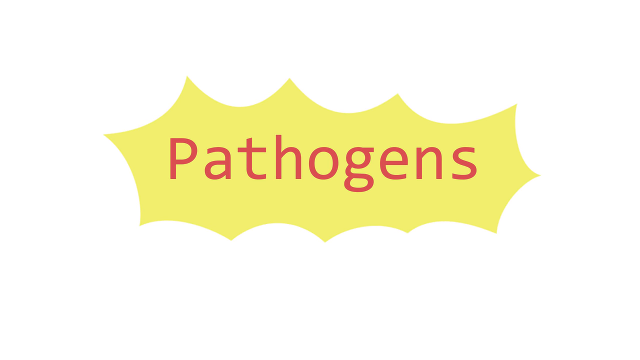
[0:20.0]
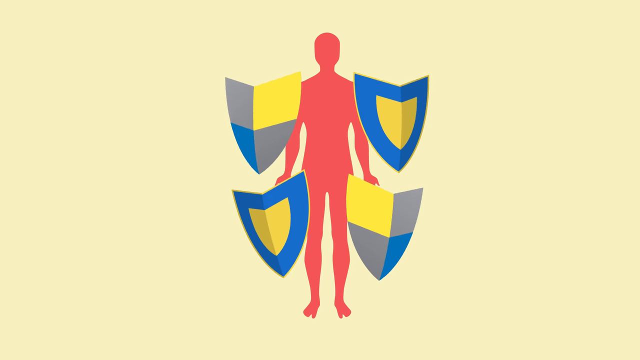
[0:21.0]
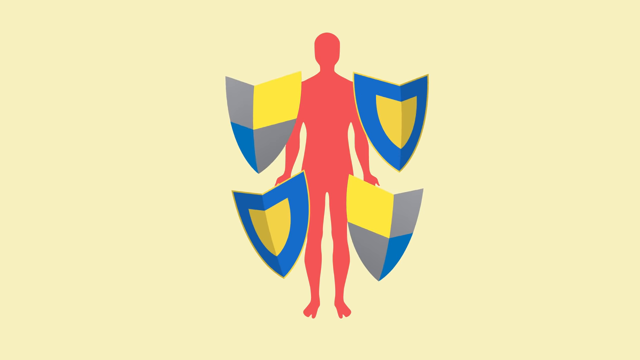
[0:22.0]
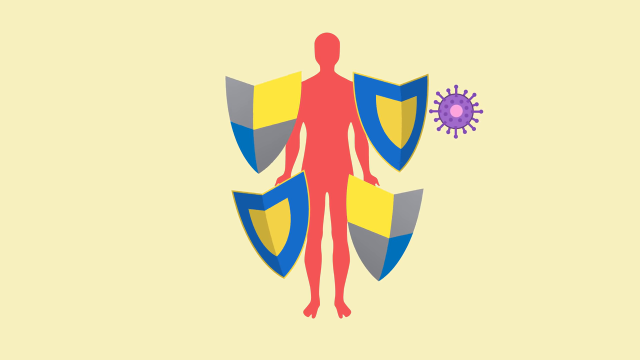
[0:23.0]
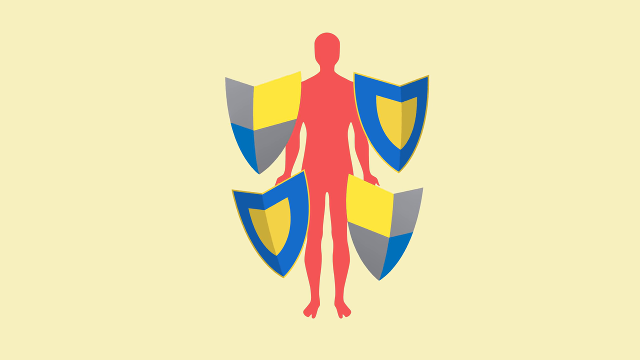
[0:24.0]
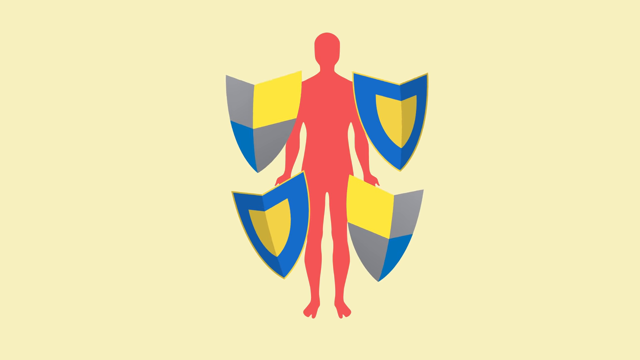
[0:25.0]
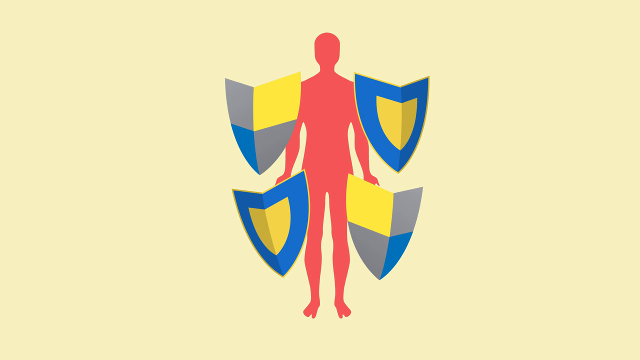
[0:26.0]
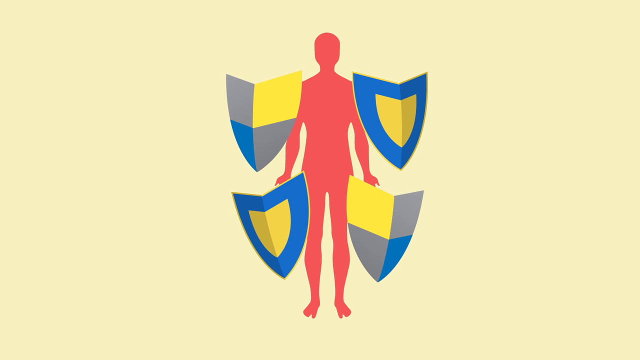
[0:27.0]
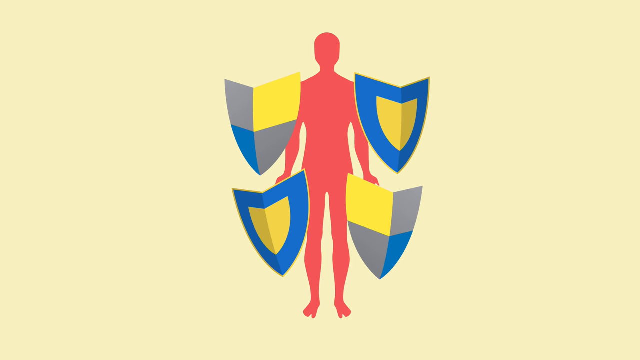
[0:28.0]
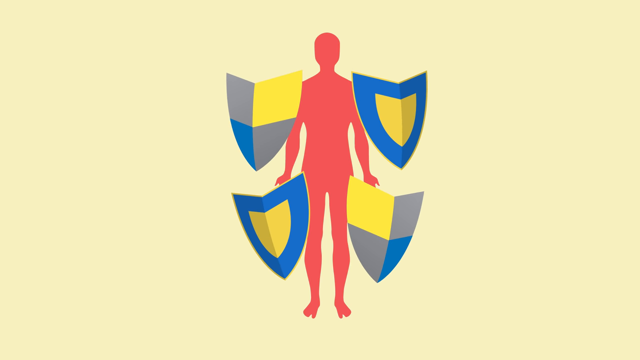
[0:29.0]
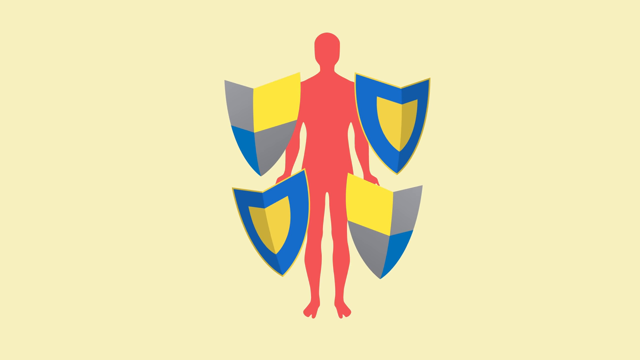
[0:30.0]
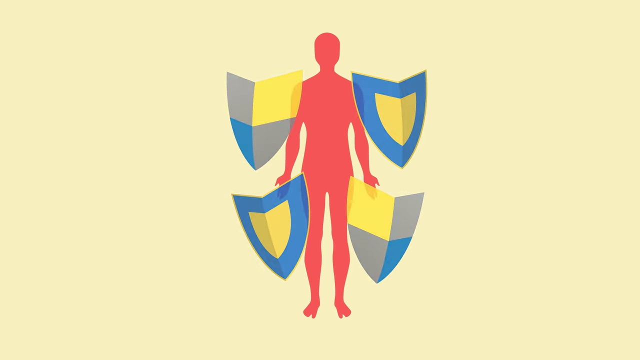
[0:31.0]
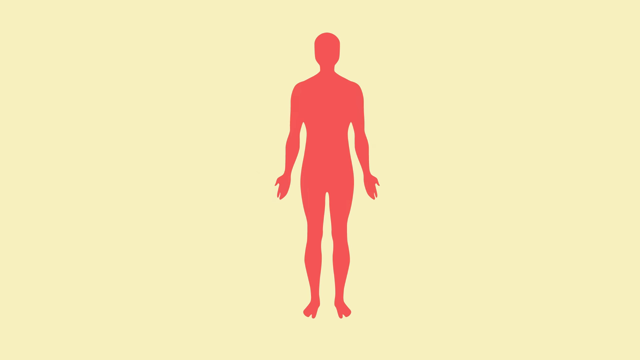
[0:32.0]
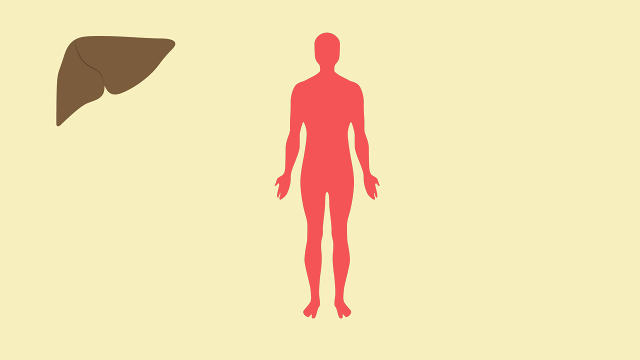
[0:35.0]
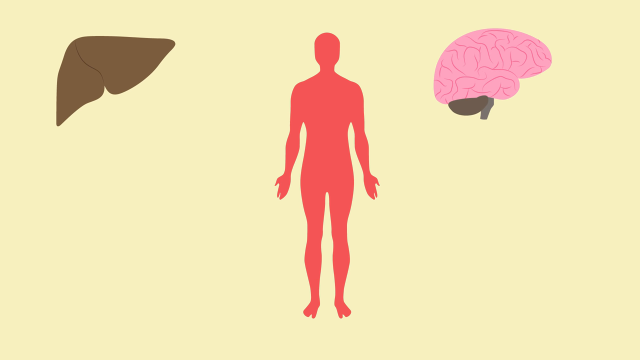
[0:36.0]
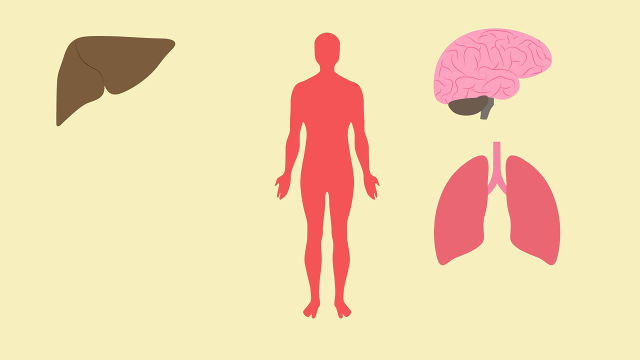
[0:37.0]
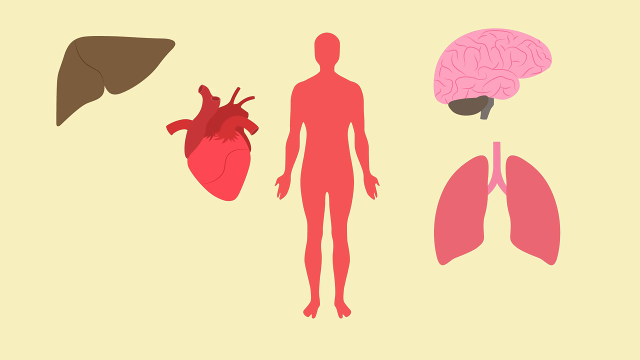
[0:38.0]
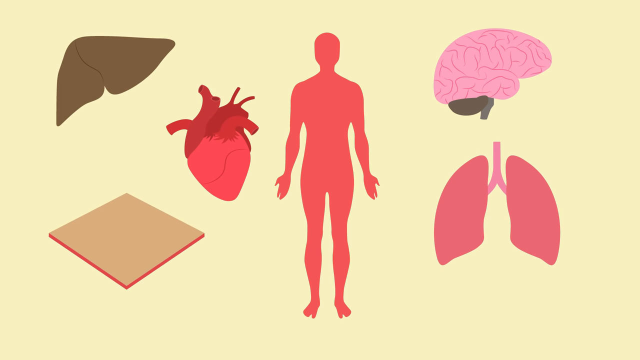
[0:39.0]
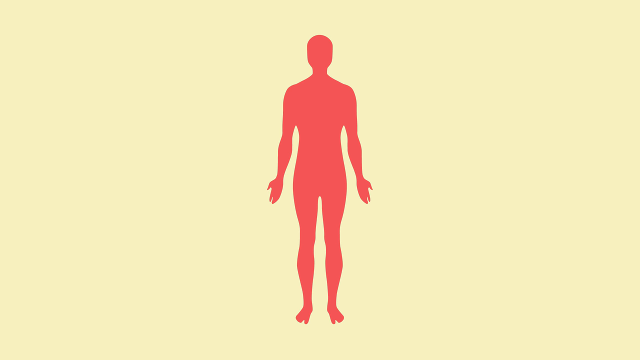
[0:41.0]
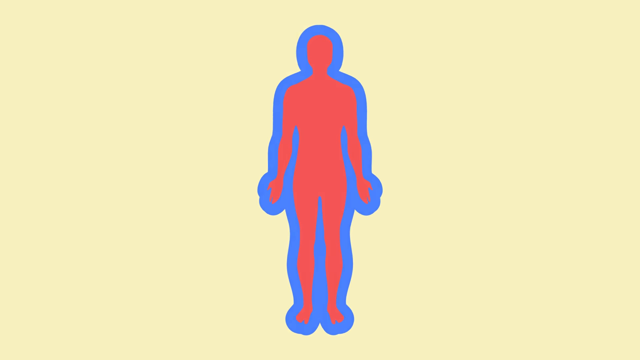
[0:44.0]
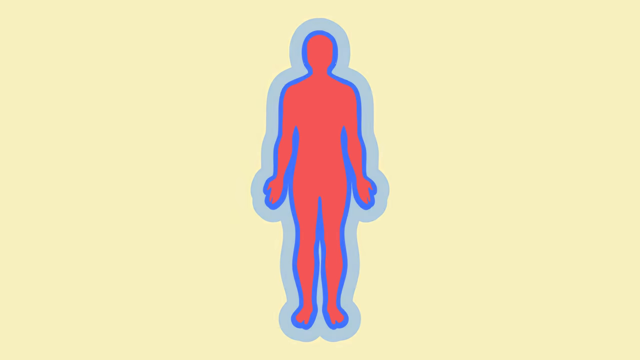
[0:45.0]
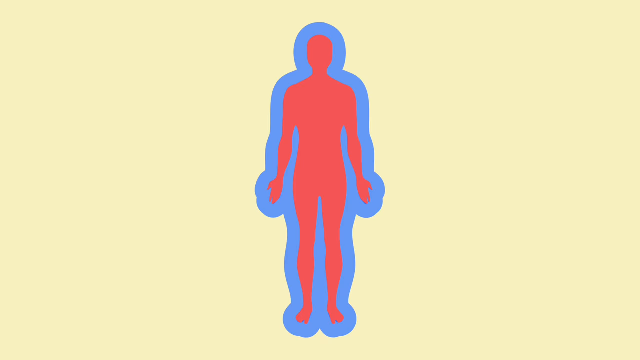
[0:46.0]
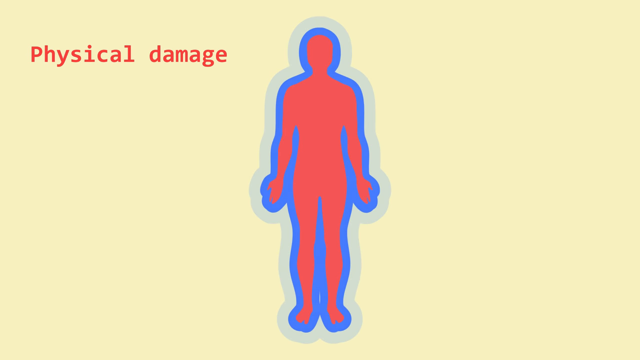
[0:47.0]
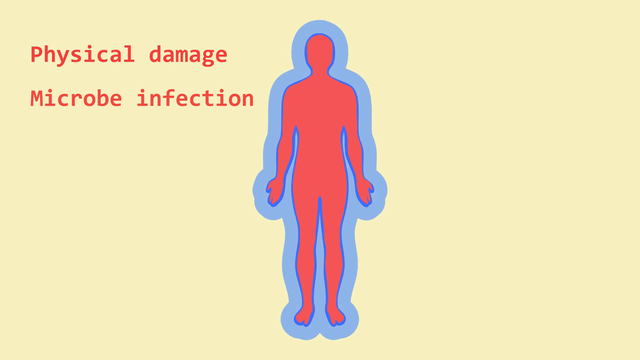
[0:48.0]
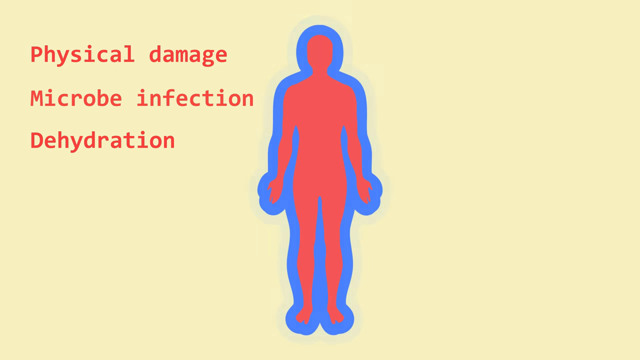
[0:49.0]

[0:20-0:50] Different forms of tumors are shown, and a red photo appears. The imagery shows the human body fighting against viruses and pathogens that may enter it.